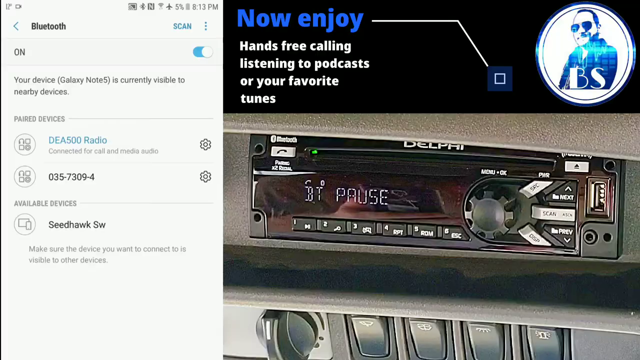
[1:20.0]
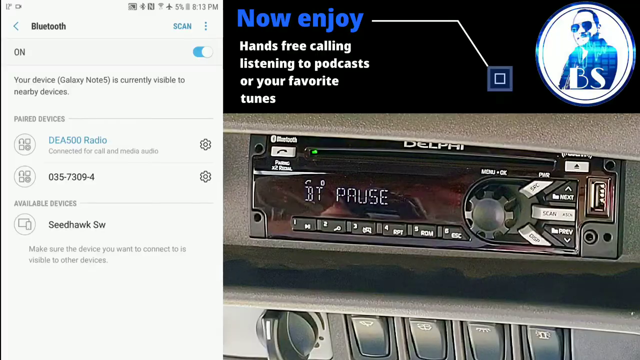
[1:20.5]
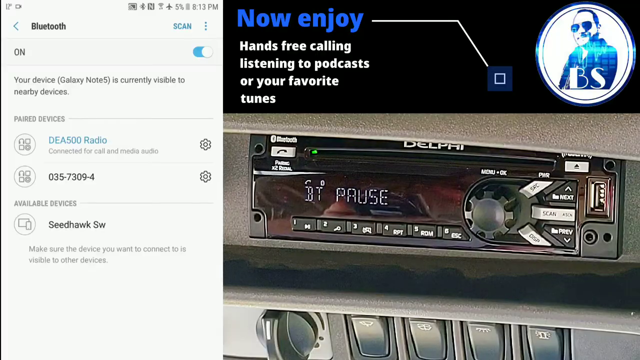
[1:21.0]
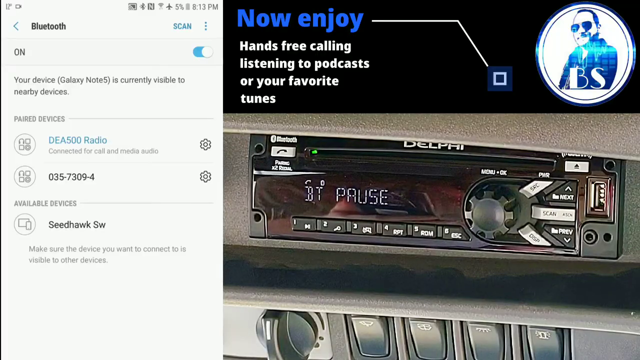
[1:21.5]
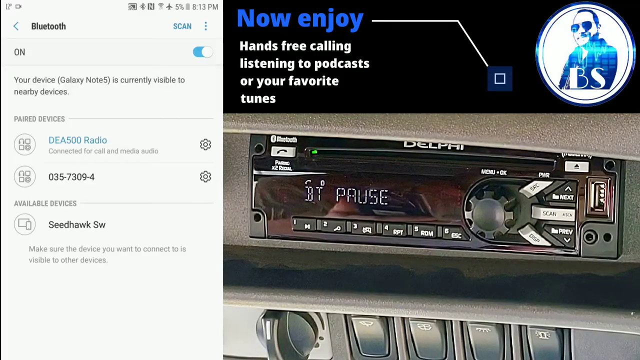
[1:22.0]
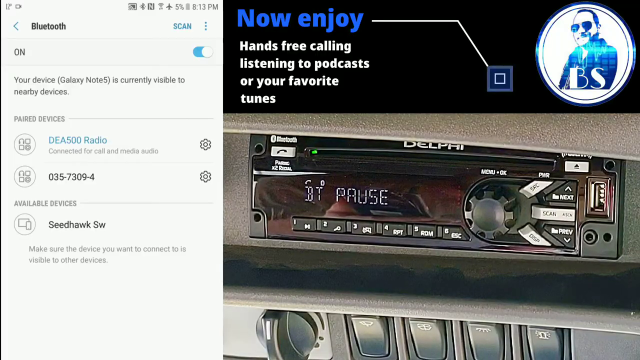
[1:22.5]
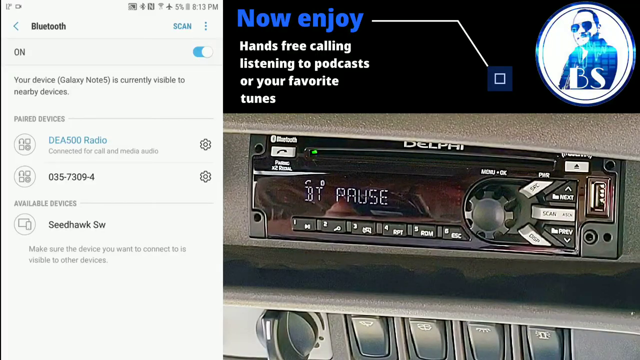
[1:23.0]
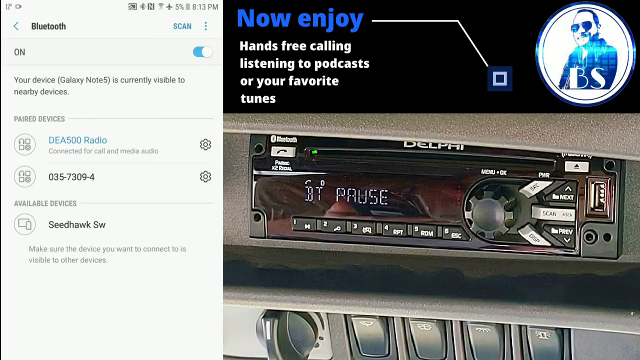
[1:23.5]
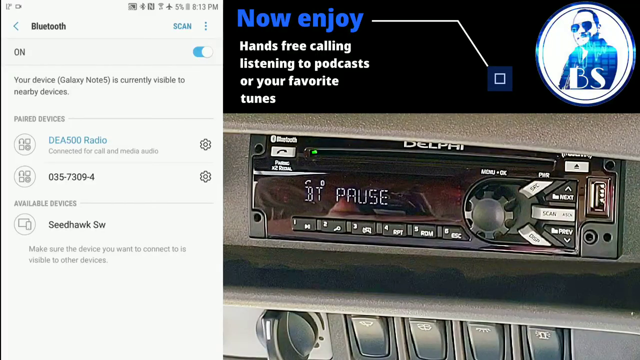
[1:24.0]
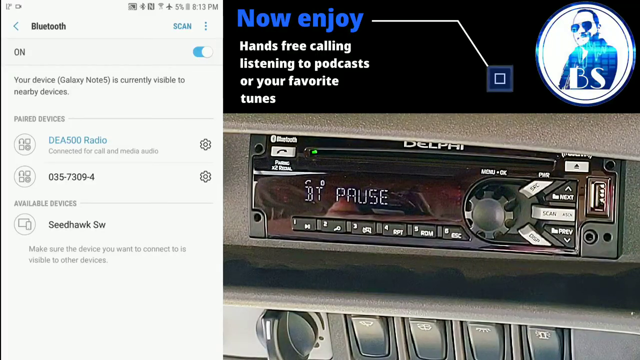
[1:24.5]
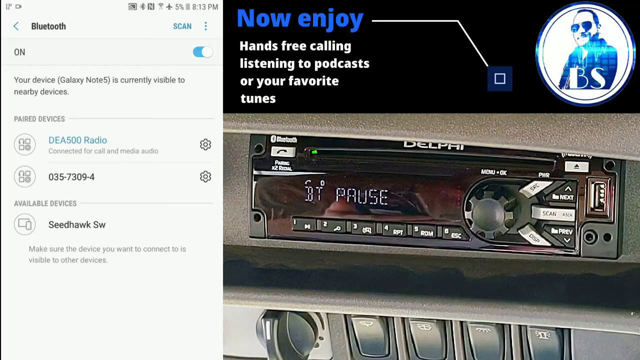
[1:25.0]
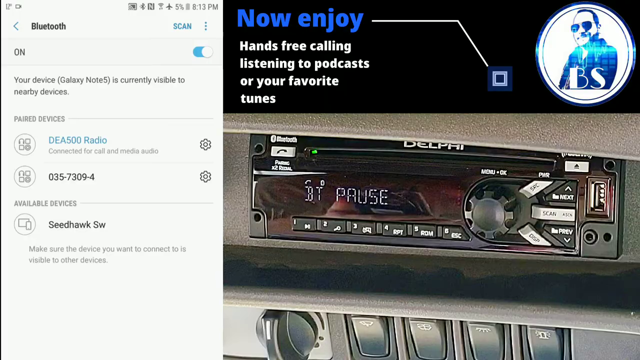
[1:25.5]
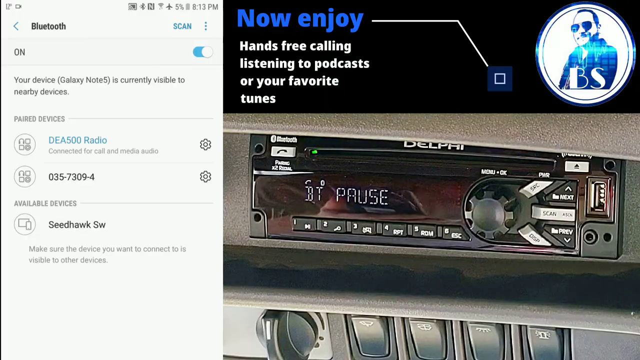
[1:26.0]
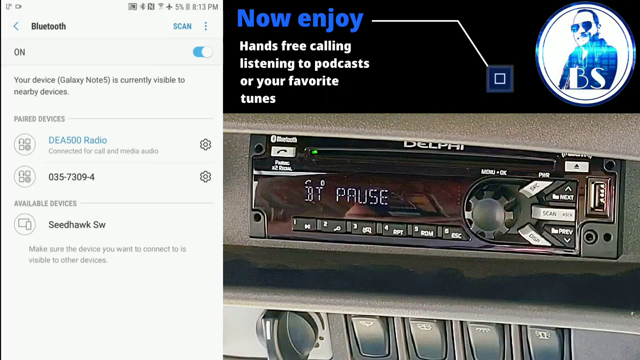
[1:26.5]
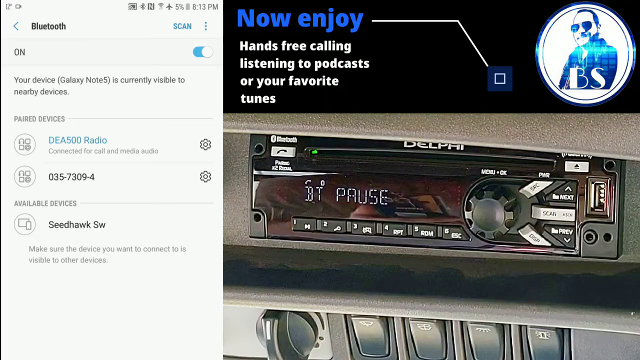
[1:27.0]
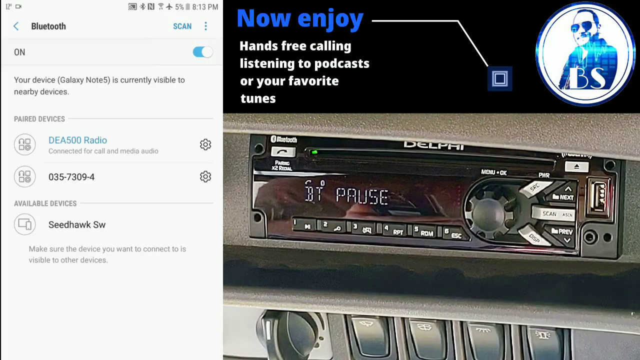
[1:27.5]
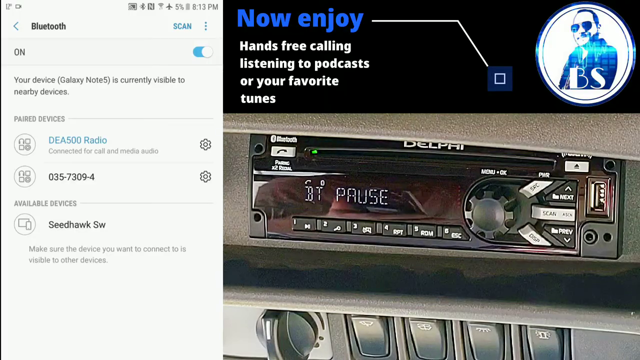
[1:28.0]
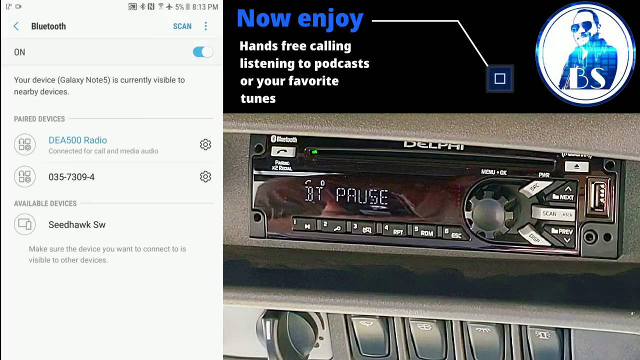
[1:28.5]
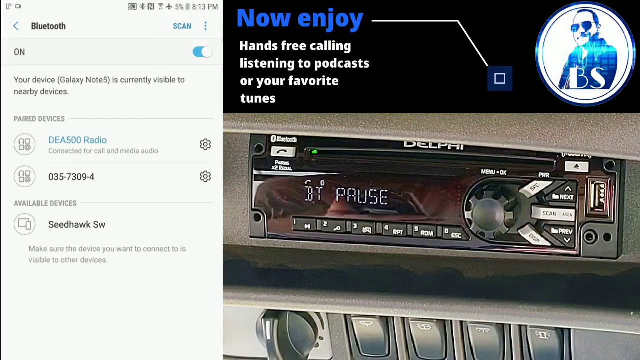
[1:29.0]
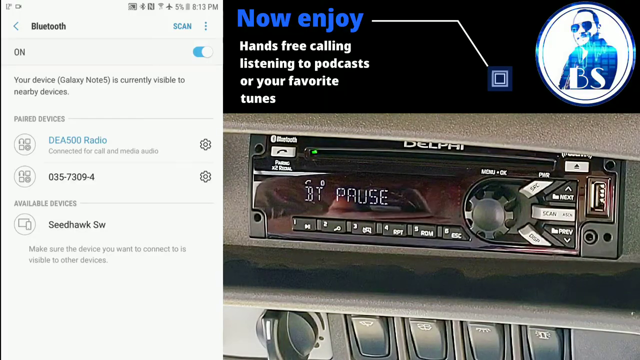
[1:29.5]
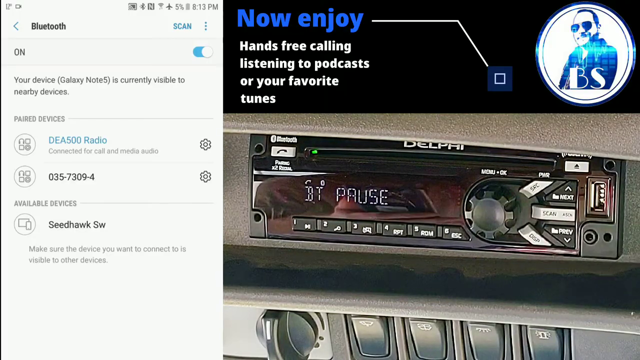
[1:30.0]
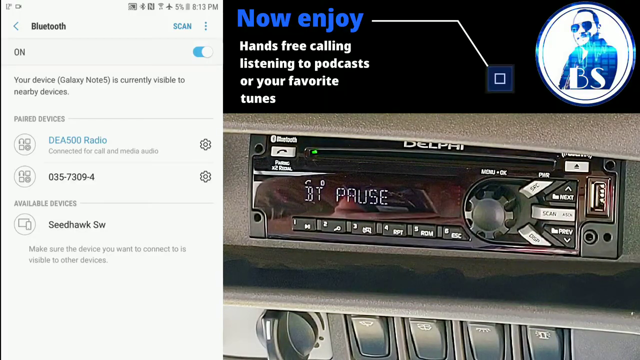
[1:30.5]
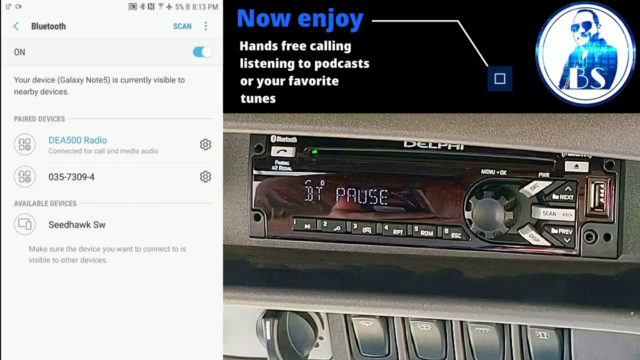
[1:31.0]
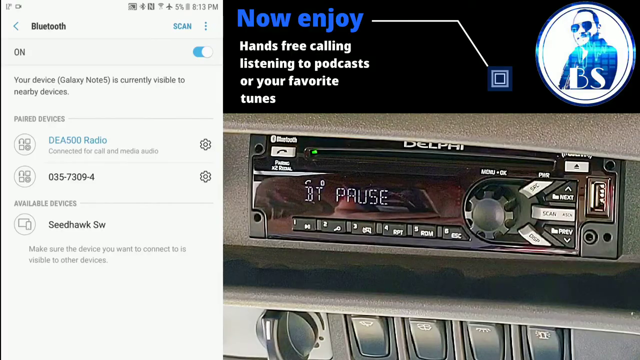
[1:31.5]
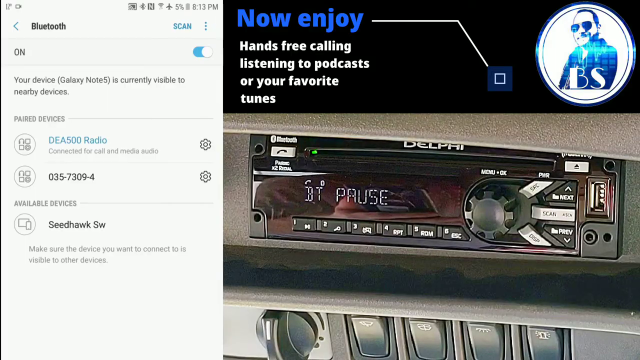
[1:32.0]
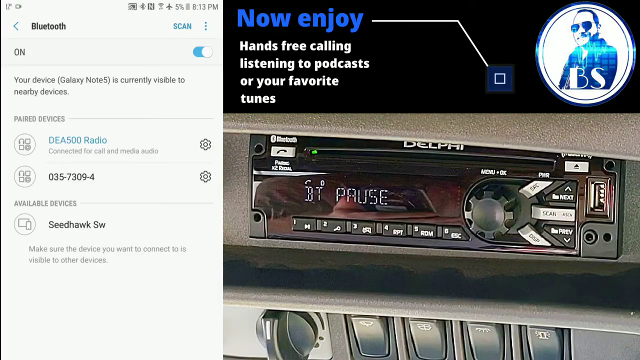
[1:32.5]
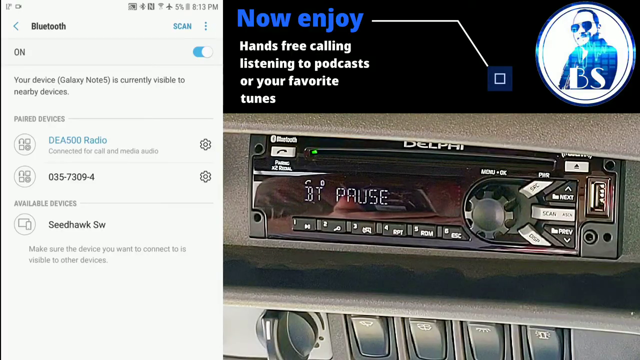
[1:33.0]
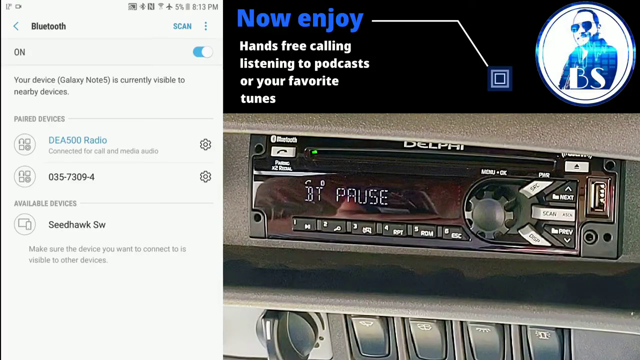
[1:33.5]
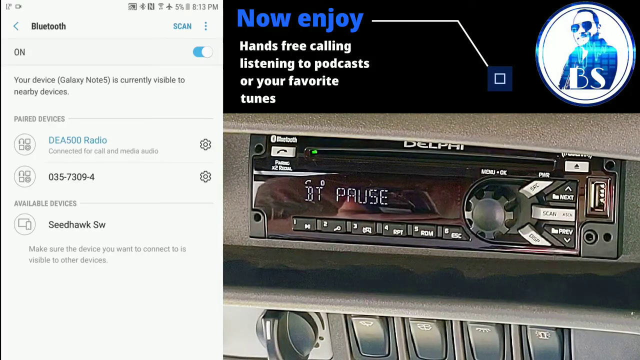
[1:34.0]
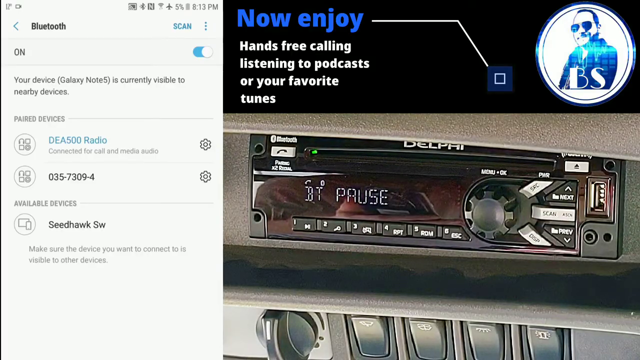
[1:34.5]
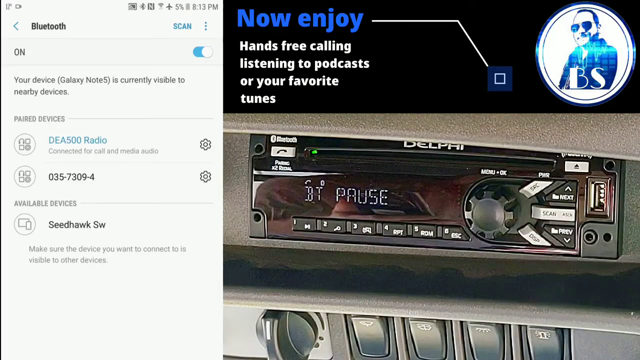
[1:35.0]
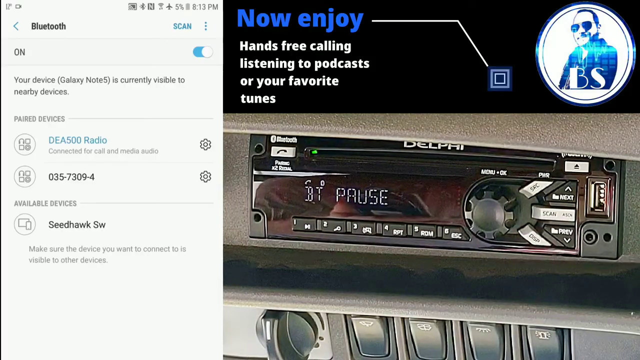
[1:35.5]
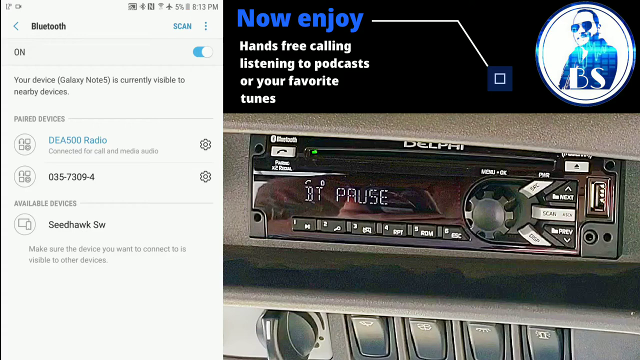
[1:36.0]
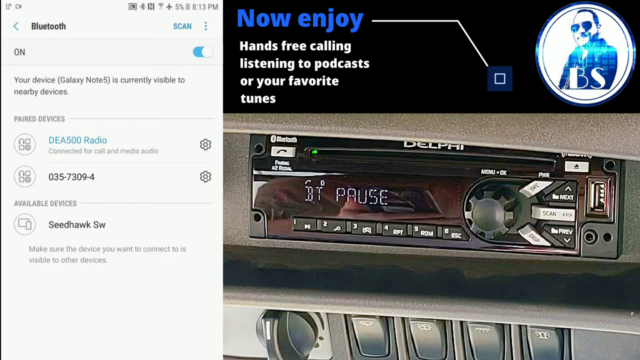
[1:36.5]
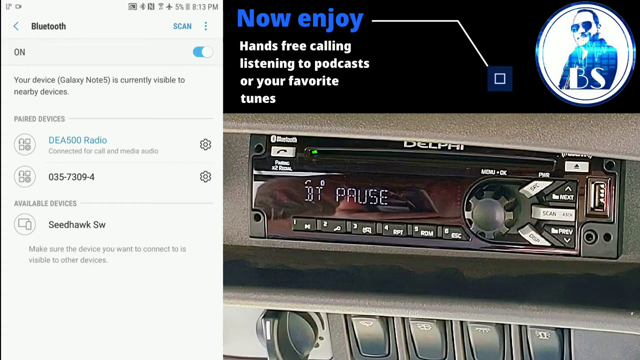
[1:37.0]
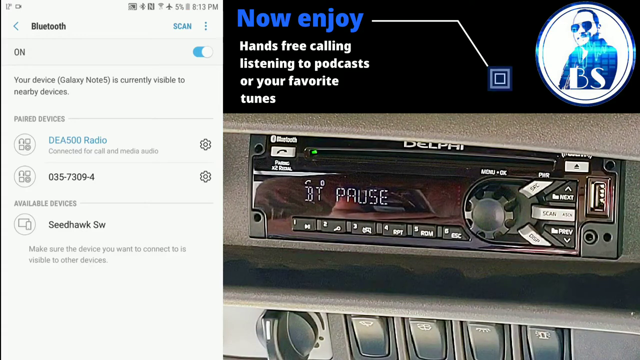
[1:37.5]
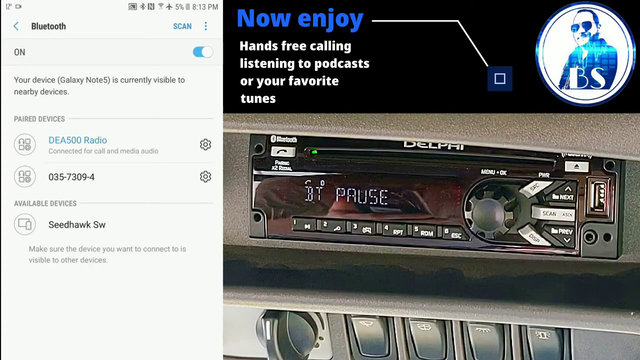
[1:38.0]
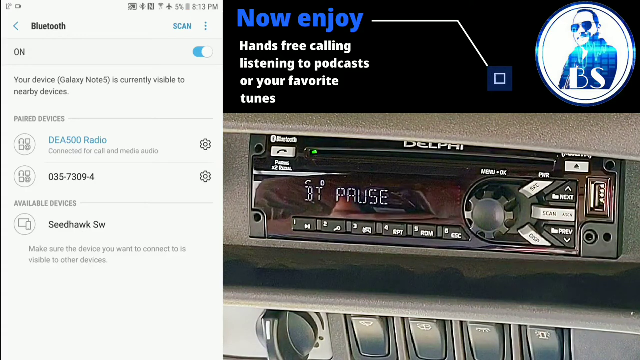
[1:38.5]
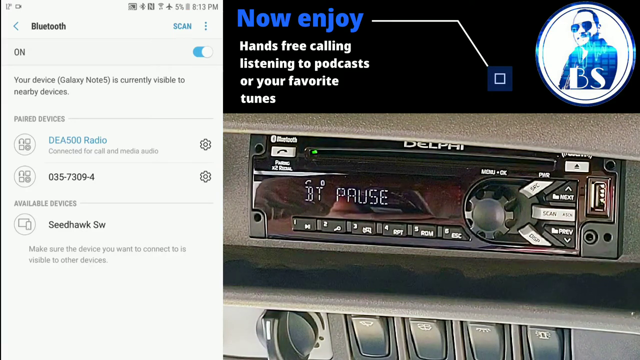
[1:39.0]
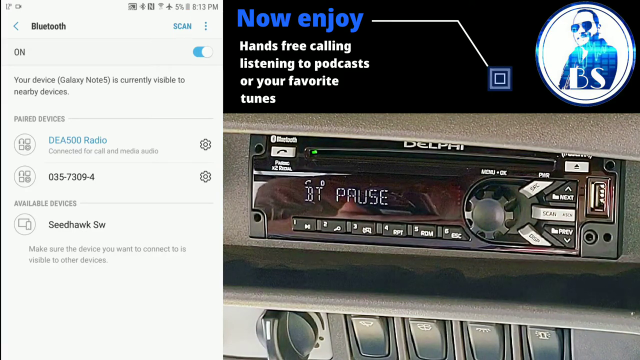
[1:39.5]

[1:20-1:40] One third of the split screen shows the shared phone screen on a Bluetooth menu, and the other two thirds show a car radio audio system. A reflection on the radio's screen shows a person in the car, using their phone, though that activity is not shown on the shared phone side. The top banner reads "now enjoy hands-free calling, listening to podcasts, or your favorite tunes", and "BT pause" is selected on the radio screen. A small square concentric animation appears in the top banner. In the top right-hand corner there is also a banner showing a man wearing sunglasses on a white circular background, with the letters B and S below him.